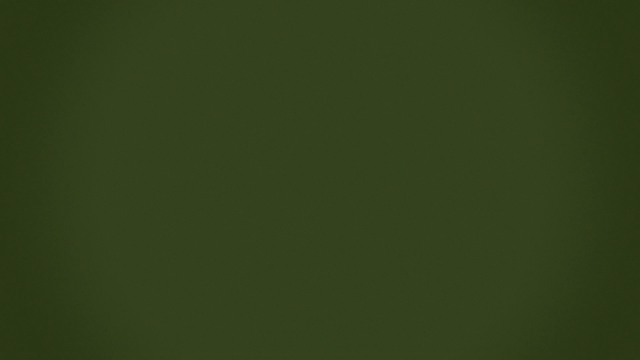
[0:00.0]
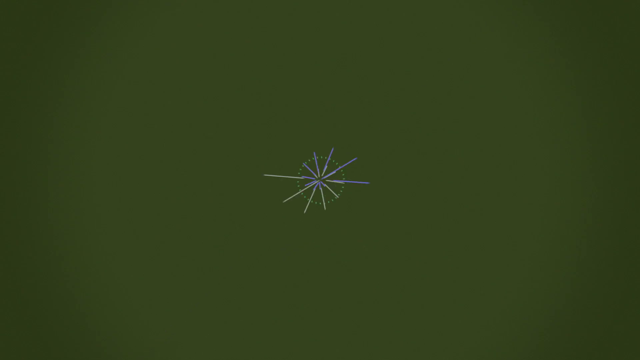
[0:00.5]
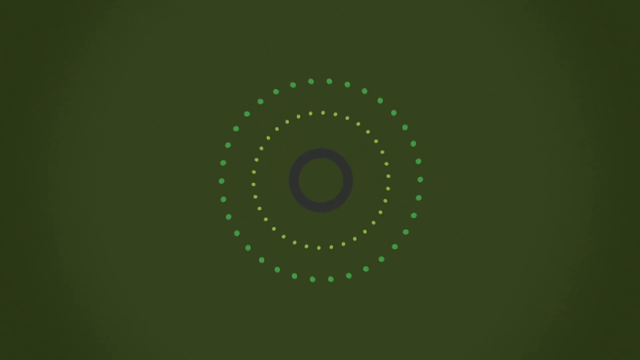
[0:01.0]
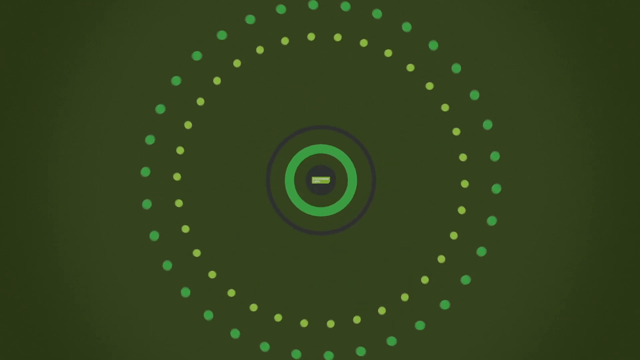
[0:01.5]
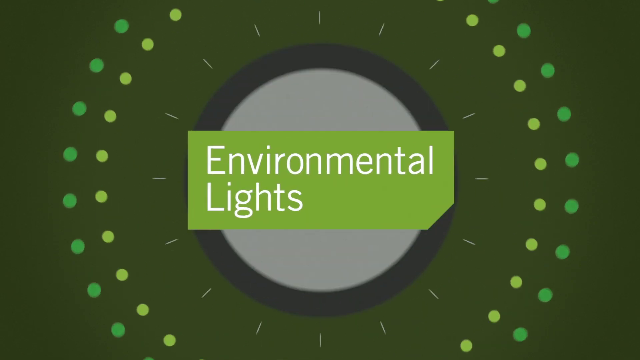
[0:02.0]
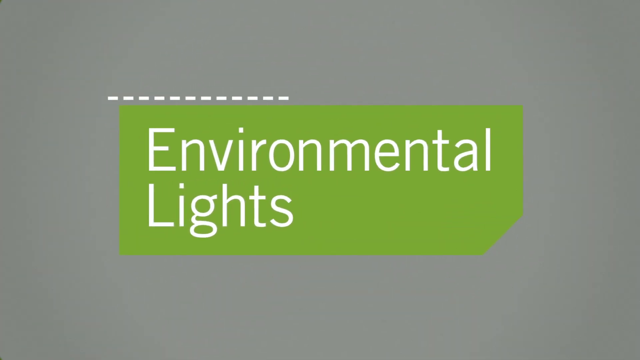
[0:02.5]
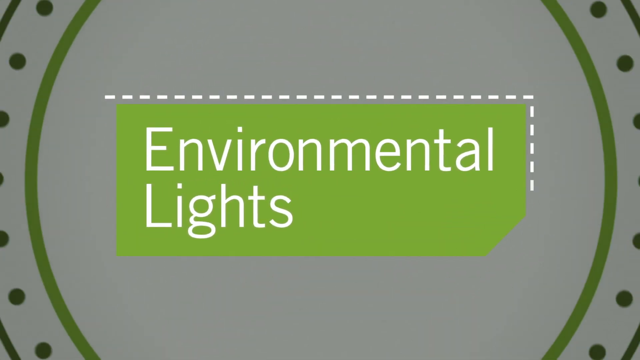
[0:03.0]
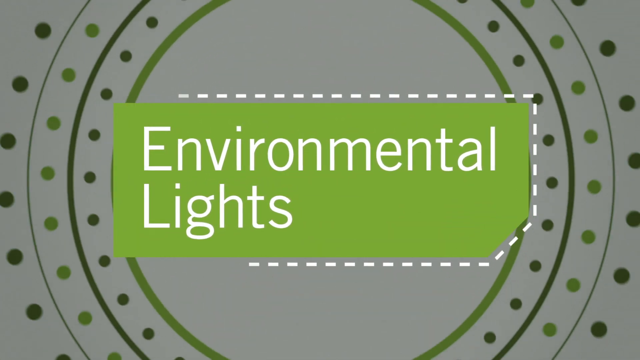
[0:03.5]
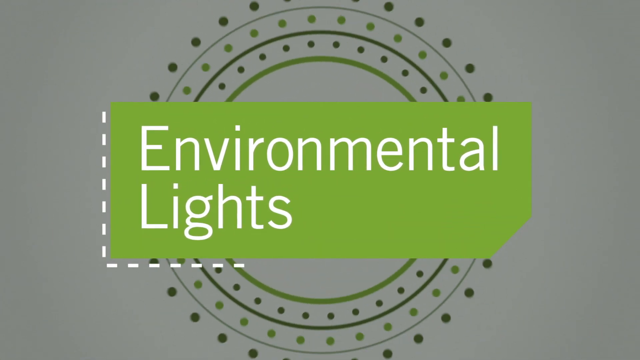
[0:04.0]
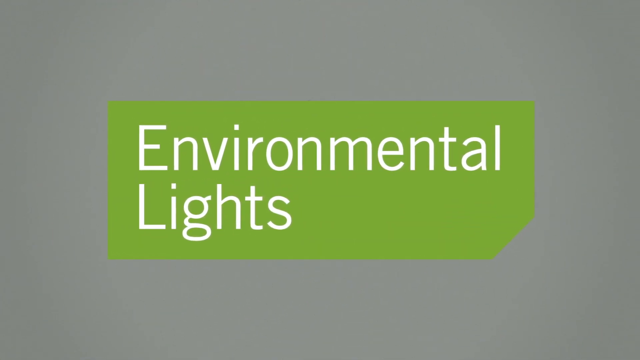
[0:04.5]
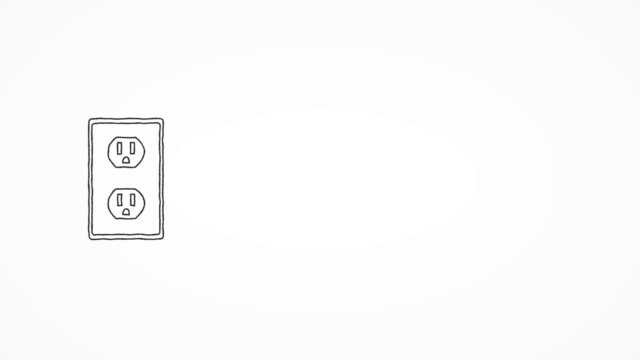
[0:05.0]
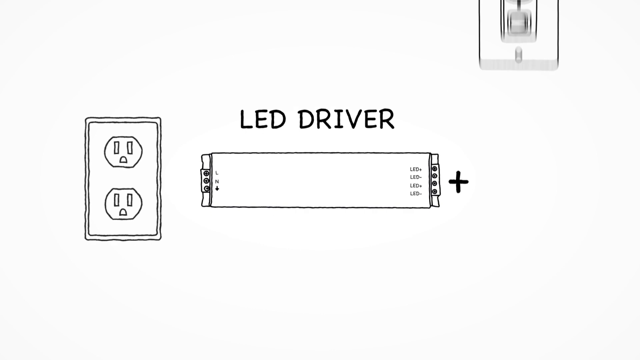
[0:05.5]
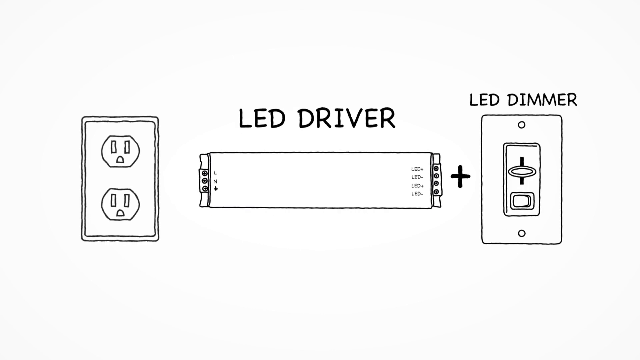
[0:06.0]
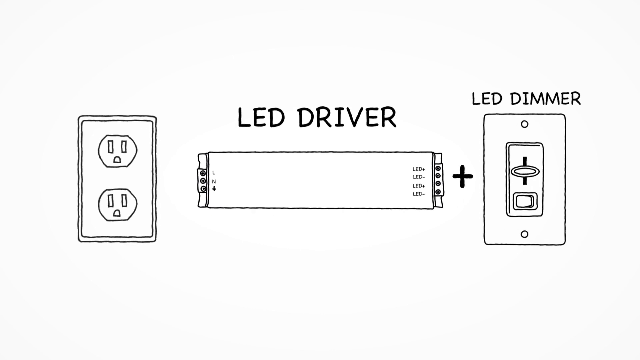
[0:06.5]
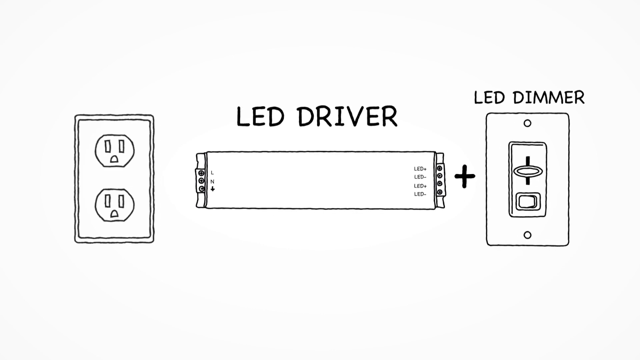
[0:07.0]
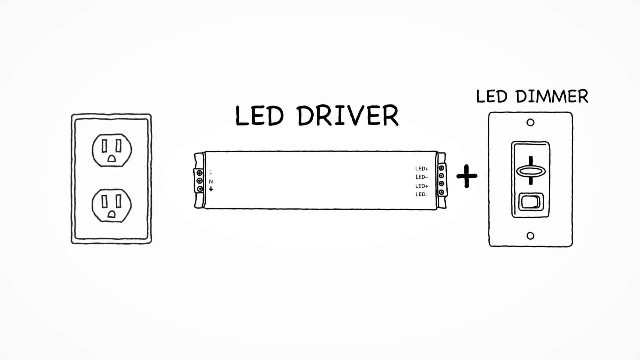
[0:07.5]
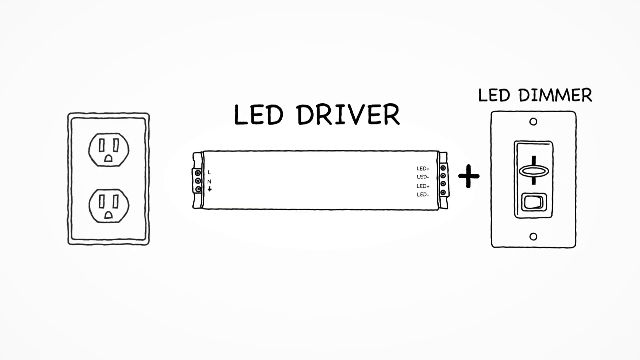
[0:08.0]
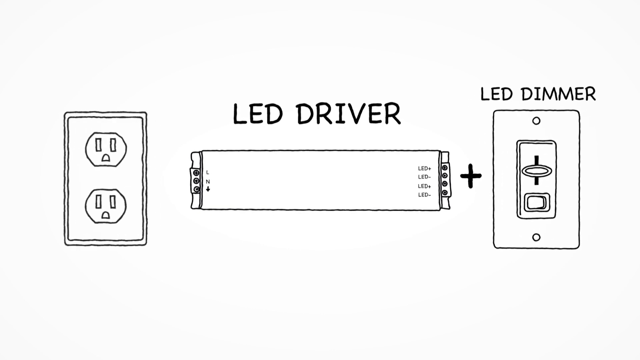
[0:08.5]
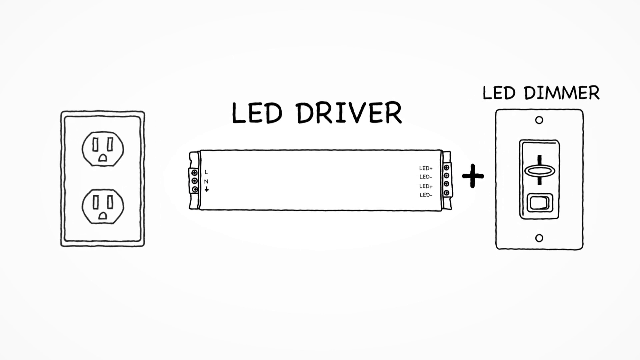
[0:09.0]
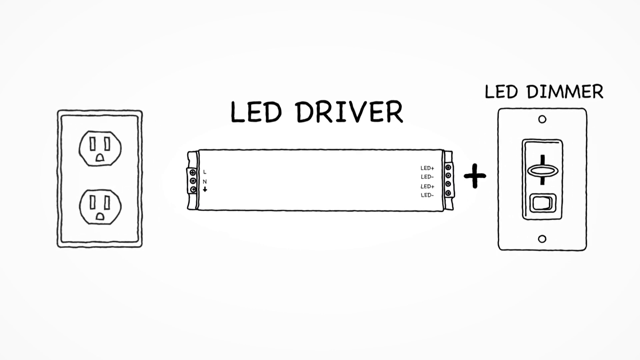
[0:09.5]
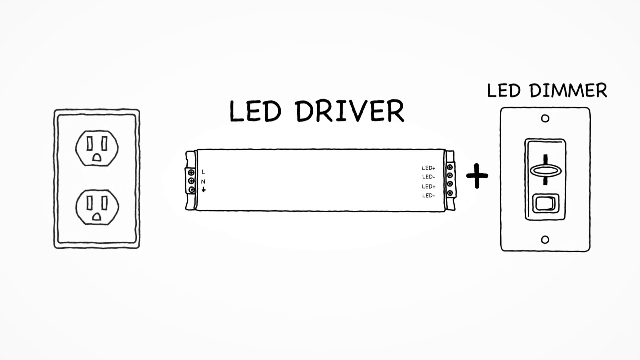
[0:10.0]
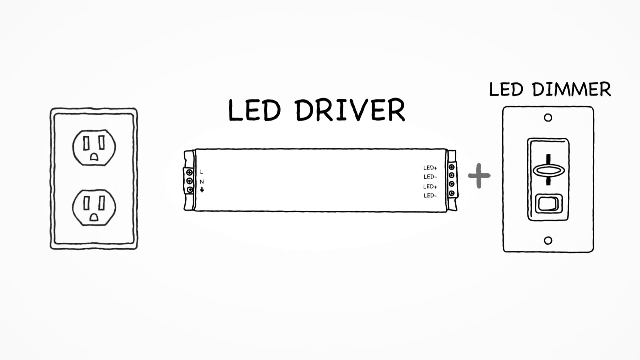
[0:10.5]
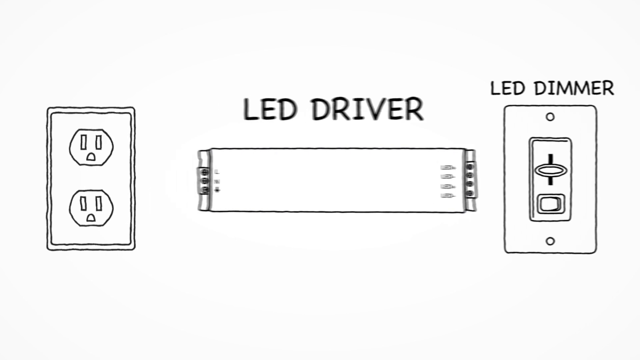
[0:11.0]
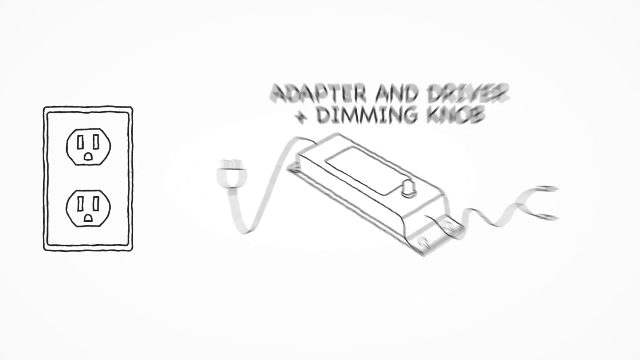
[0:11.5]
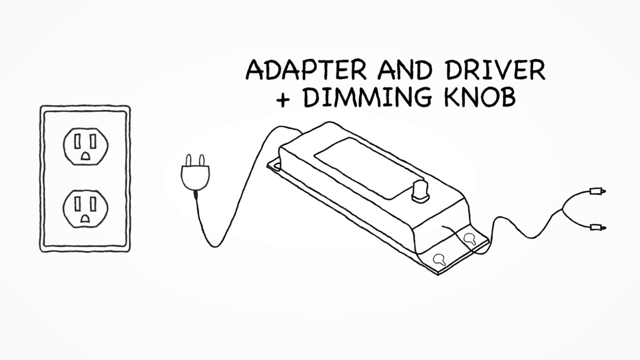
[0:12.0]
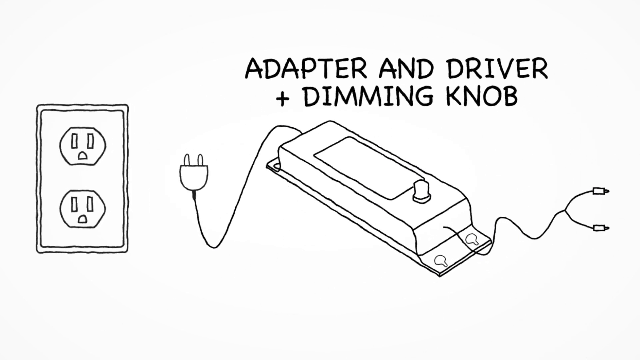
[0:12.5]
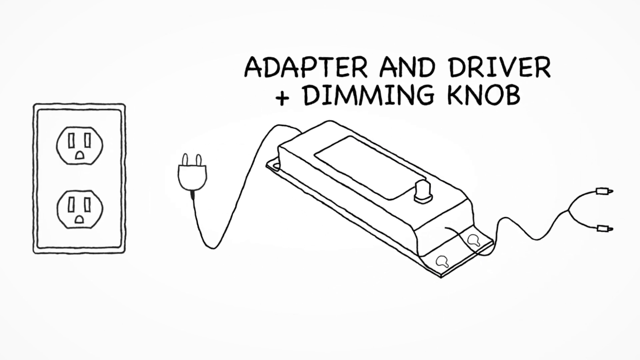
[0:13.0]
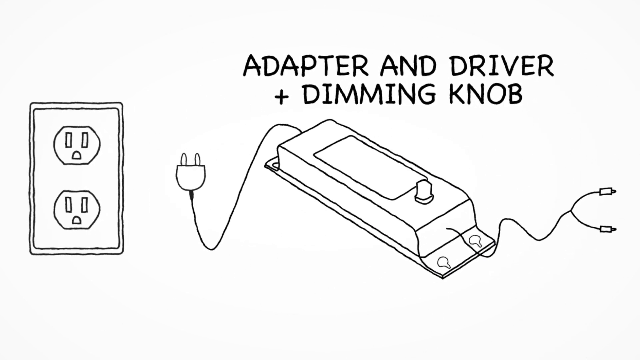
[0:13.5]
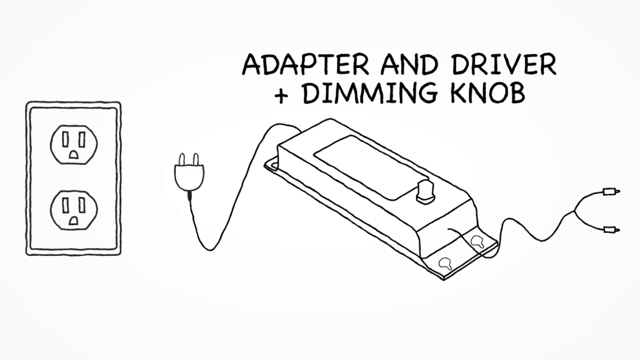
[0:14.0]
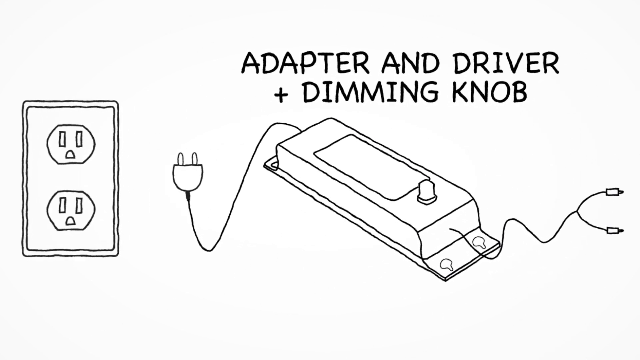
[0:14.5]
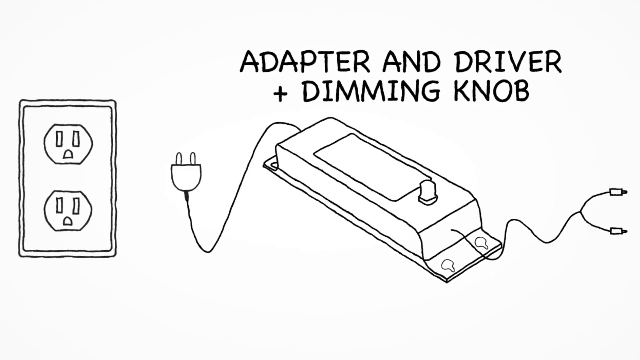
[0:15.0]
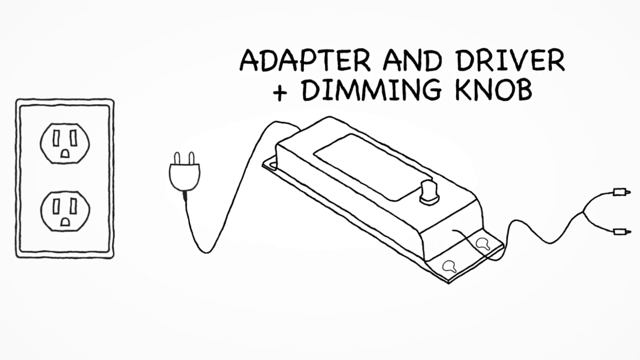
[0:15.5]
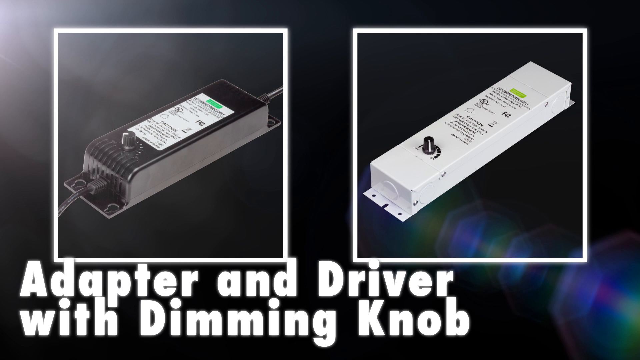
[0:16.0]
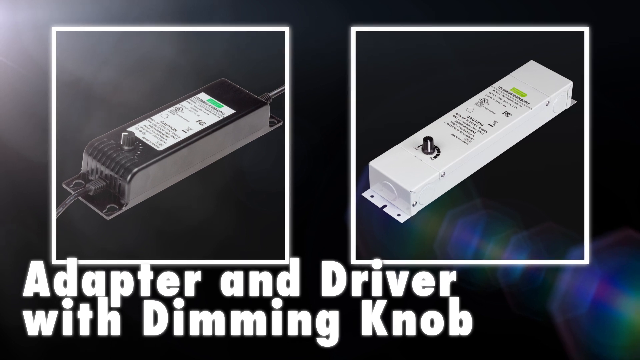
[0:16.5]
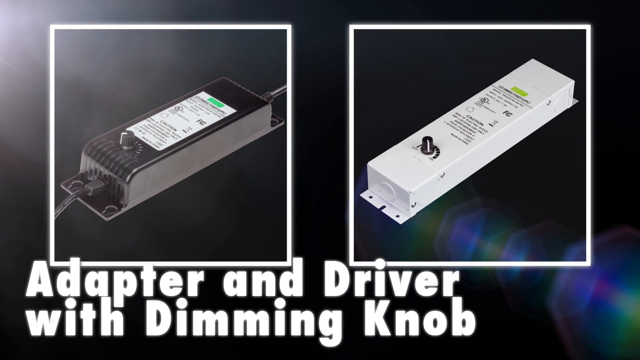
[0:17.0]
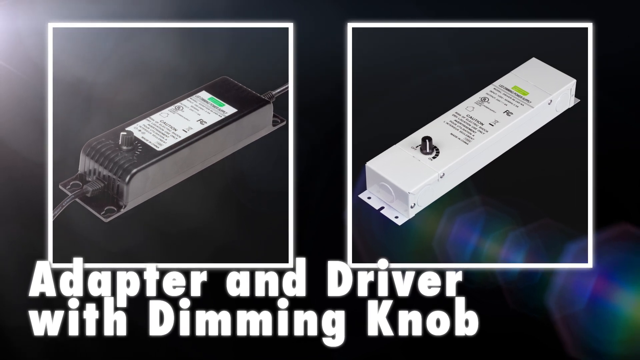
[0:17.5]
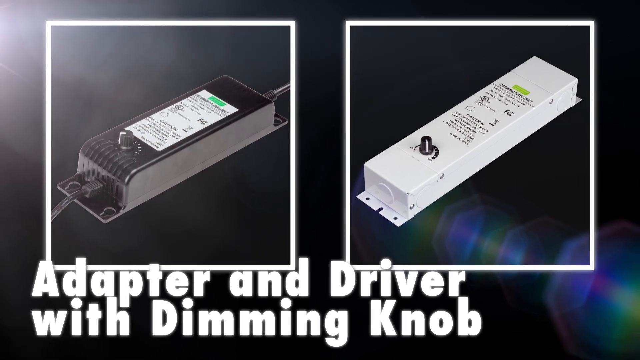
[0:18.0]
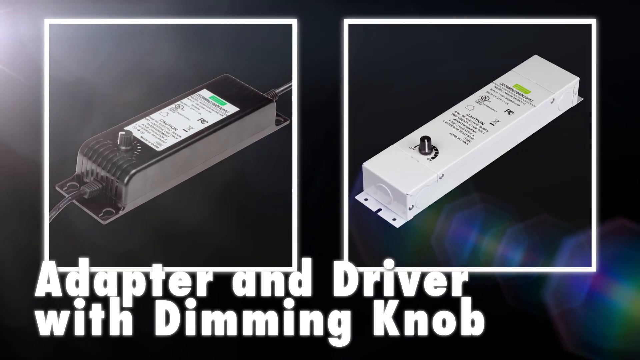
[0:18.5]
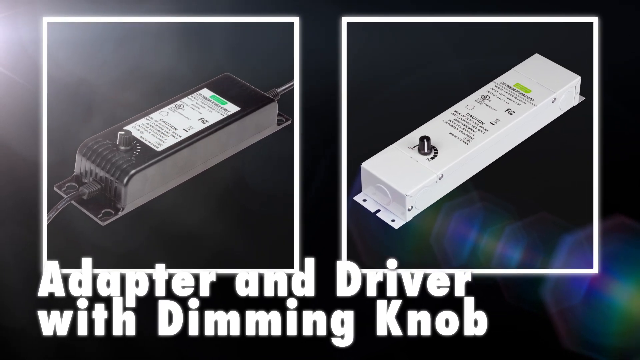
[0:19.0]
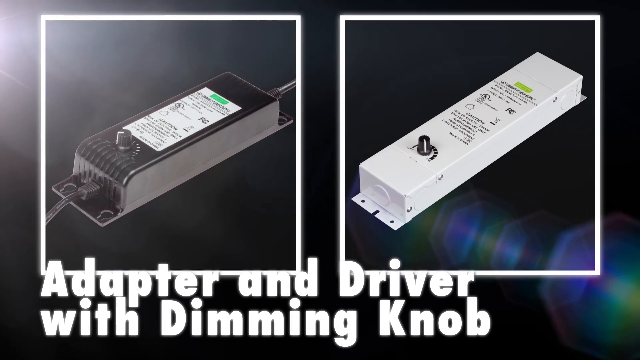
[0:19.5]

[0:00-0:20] The video seems to be about an LED driver and LED dimmer, involving an adapter and a driver with a dimmer.